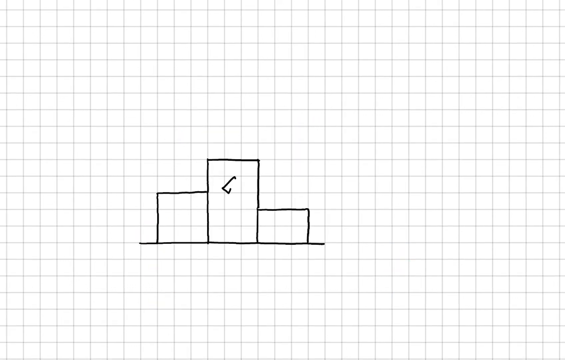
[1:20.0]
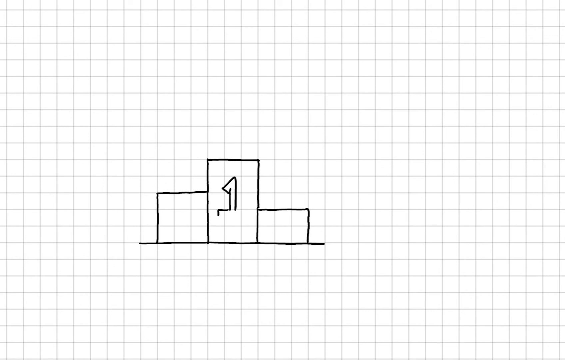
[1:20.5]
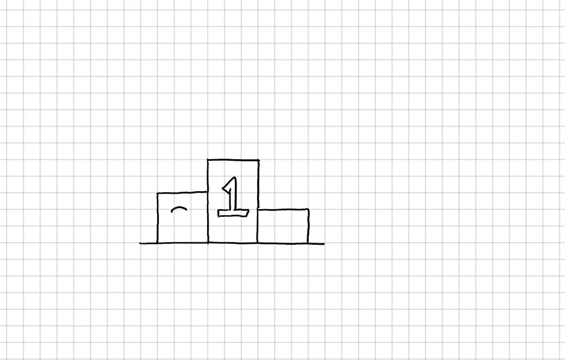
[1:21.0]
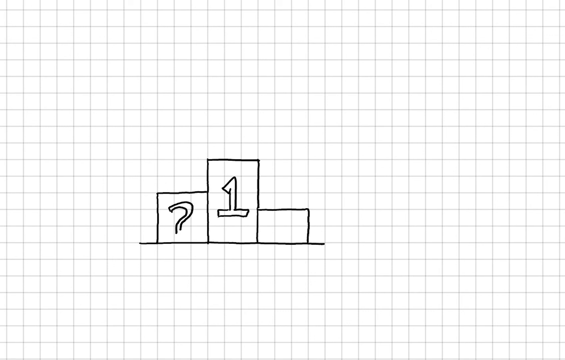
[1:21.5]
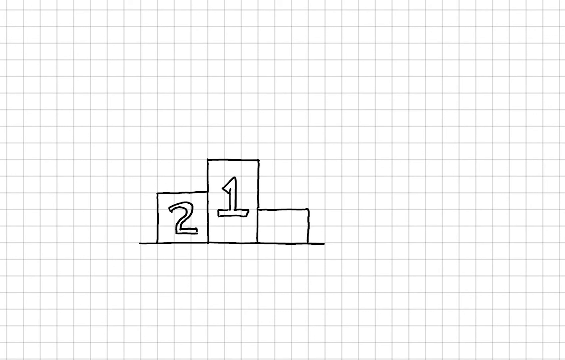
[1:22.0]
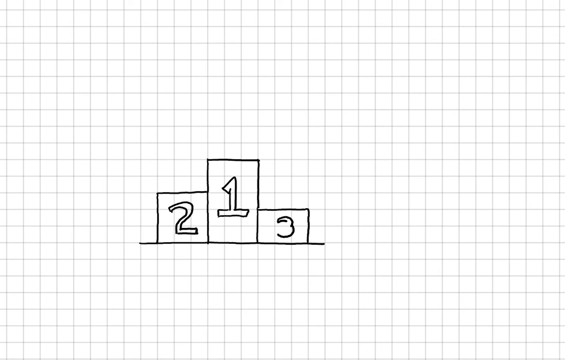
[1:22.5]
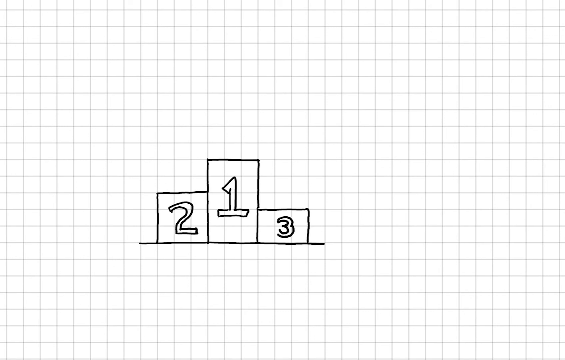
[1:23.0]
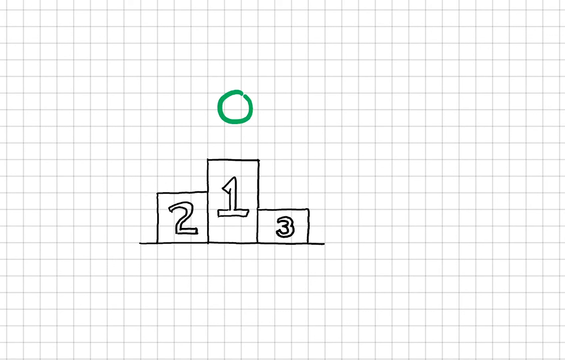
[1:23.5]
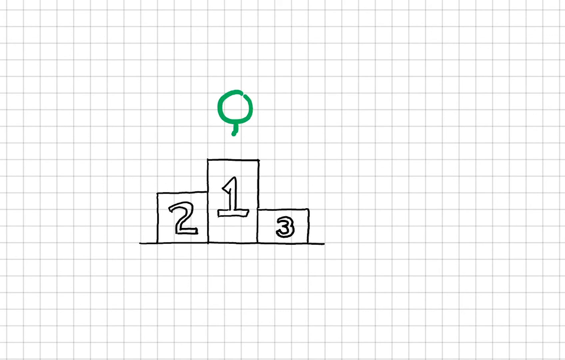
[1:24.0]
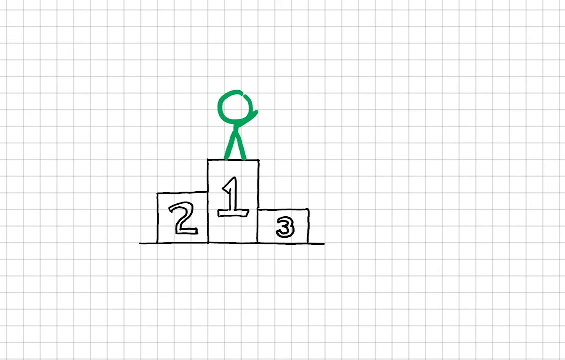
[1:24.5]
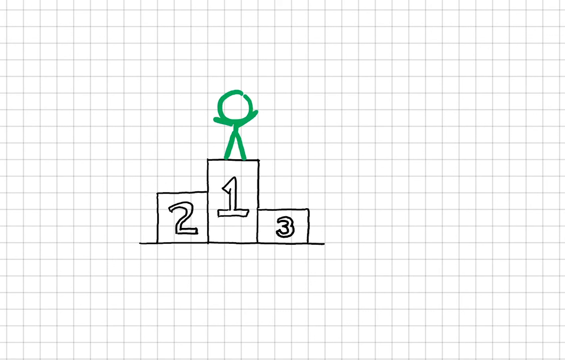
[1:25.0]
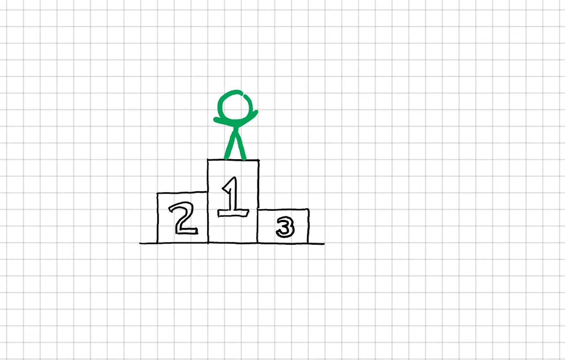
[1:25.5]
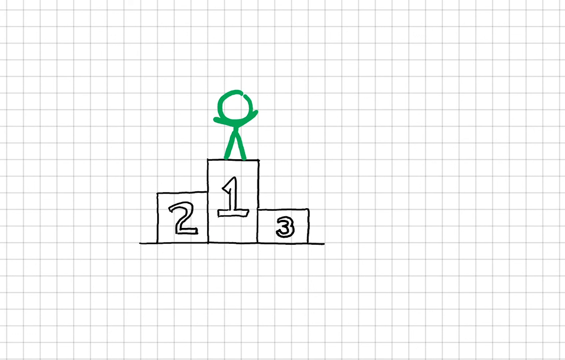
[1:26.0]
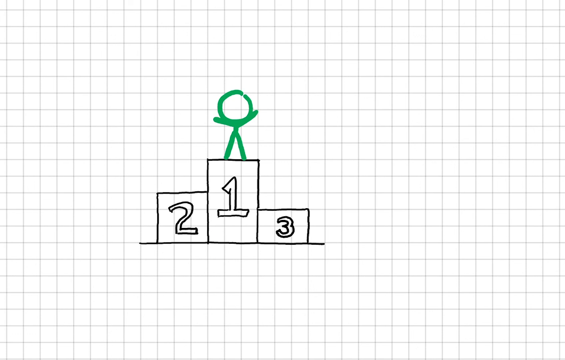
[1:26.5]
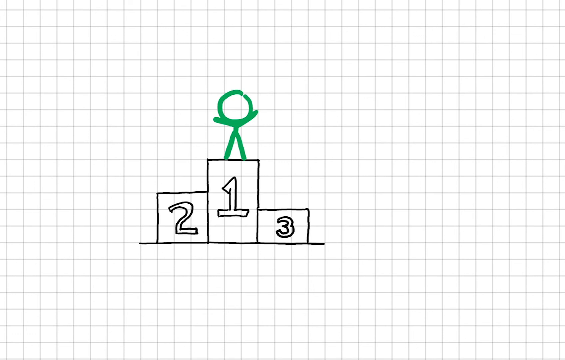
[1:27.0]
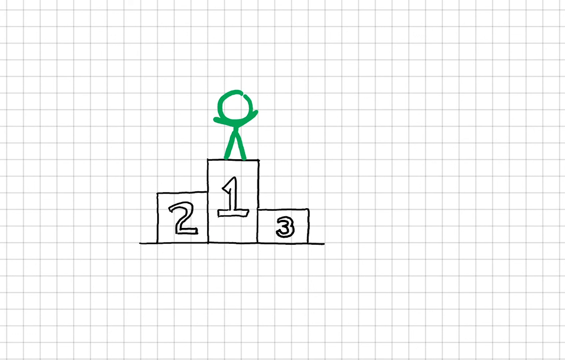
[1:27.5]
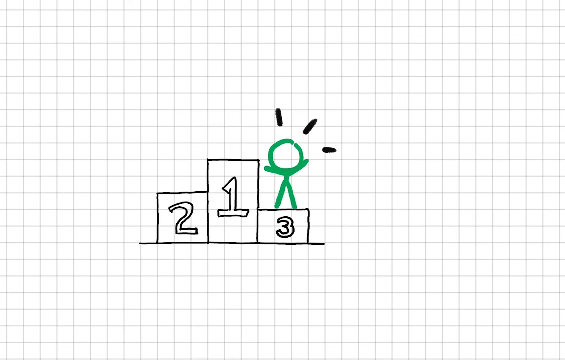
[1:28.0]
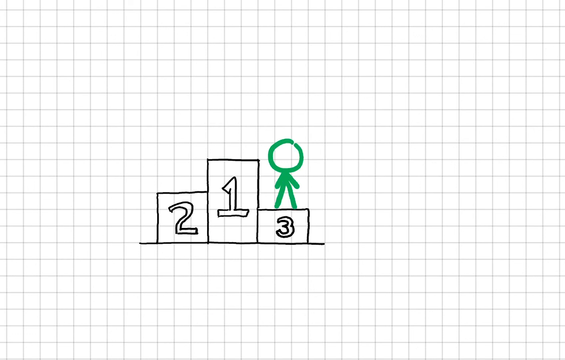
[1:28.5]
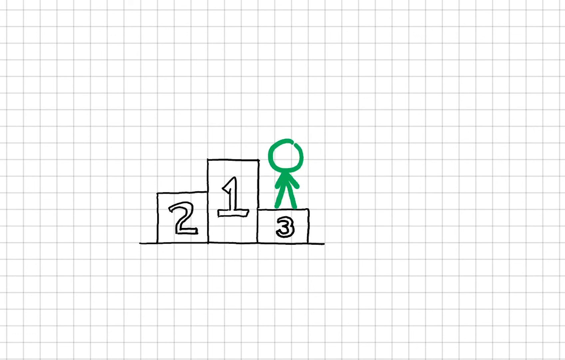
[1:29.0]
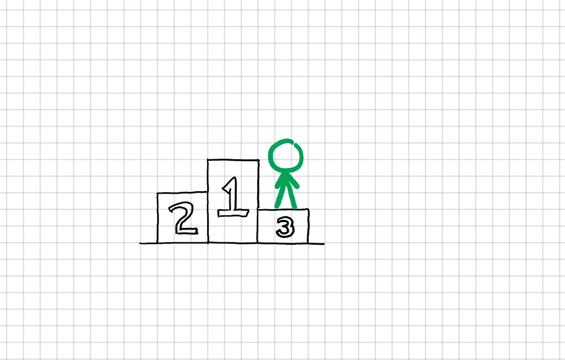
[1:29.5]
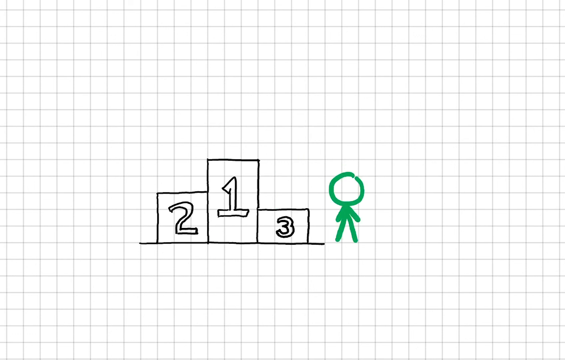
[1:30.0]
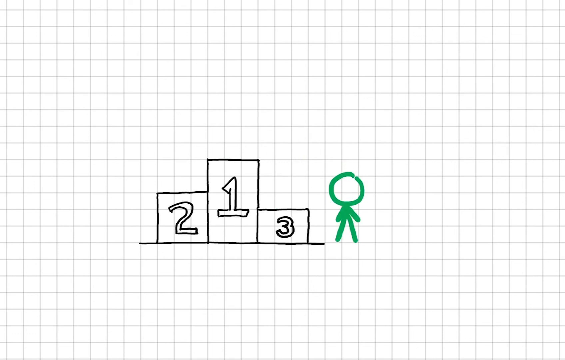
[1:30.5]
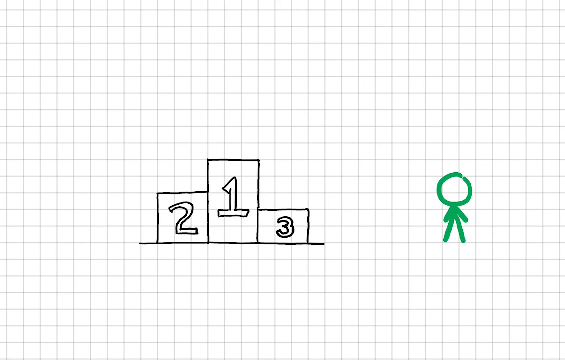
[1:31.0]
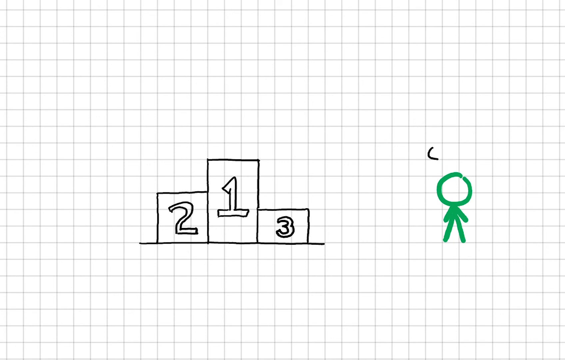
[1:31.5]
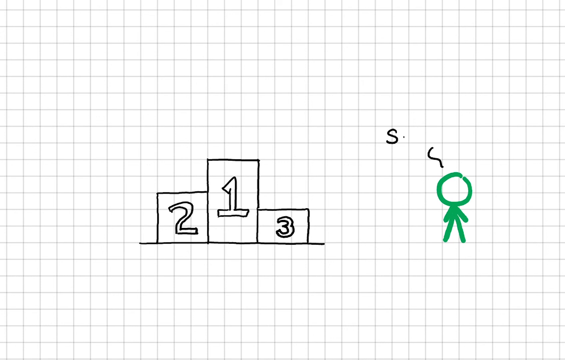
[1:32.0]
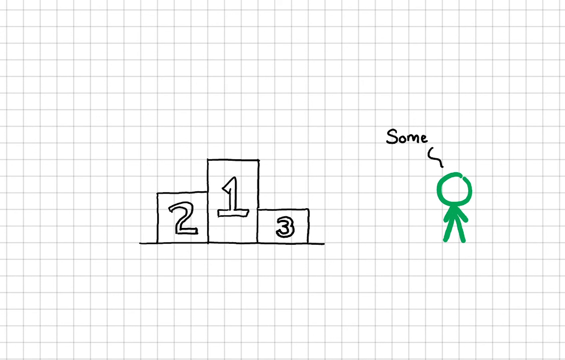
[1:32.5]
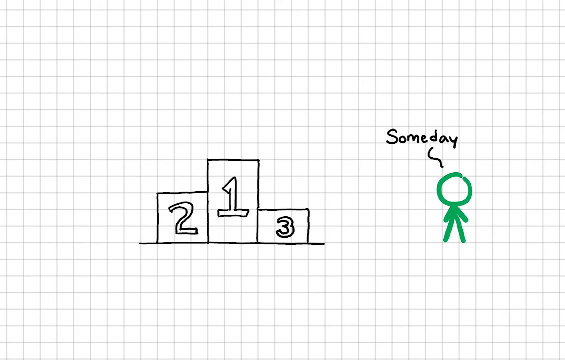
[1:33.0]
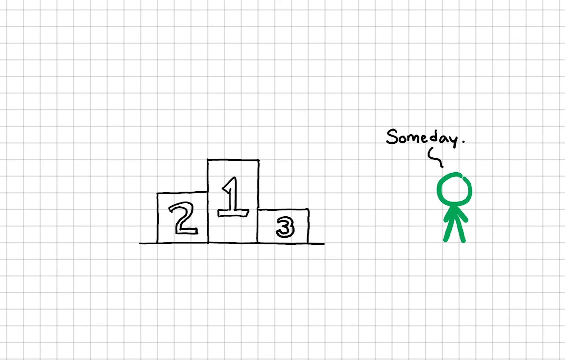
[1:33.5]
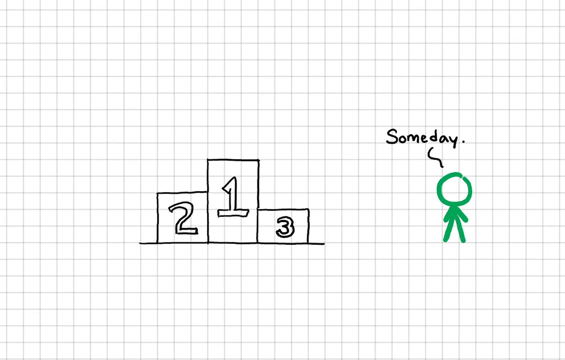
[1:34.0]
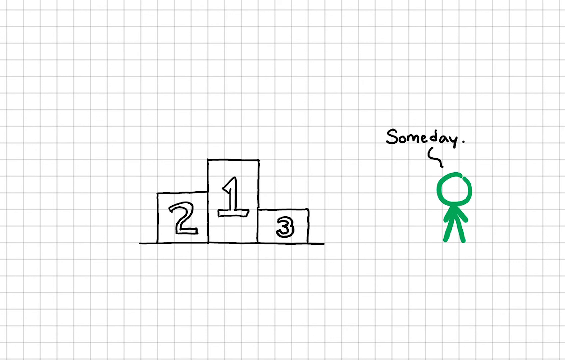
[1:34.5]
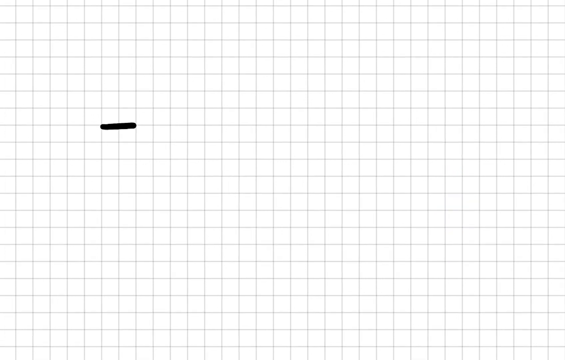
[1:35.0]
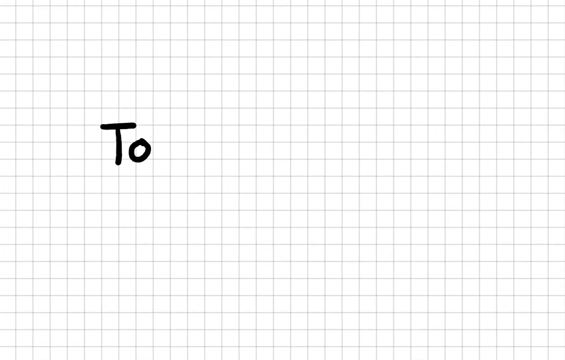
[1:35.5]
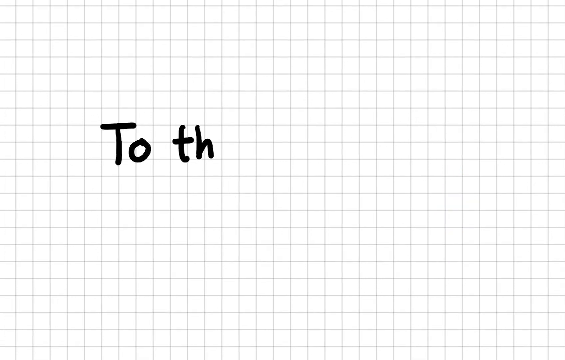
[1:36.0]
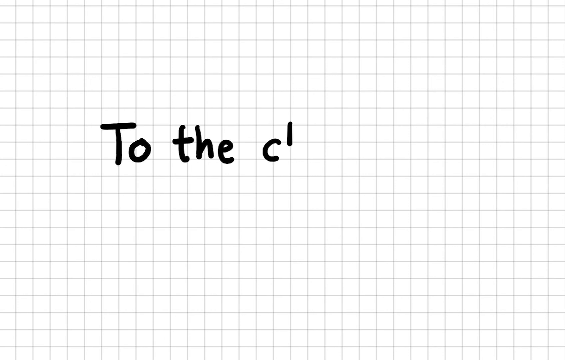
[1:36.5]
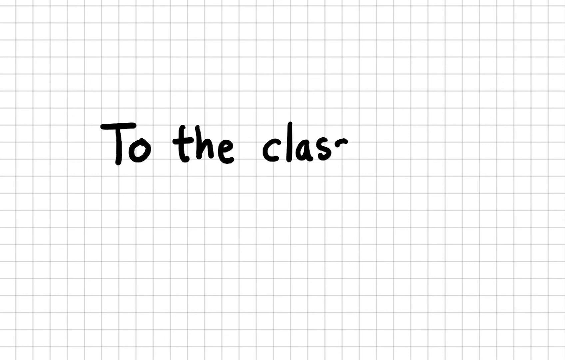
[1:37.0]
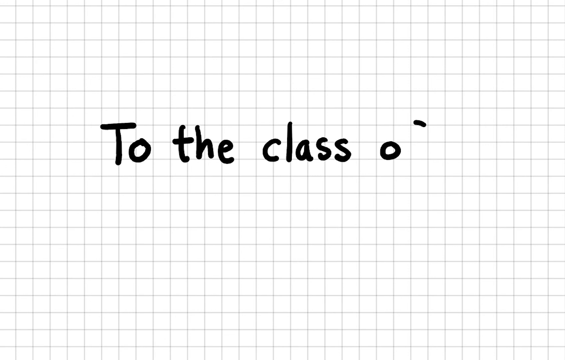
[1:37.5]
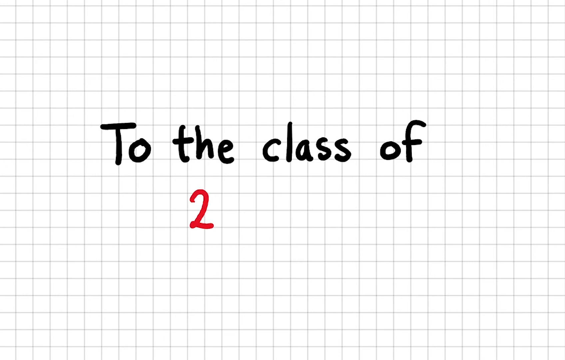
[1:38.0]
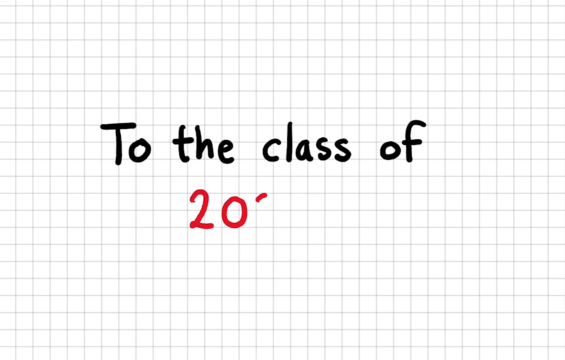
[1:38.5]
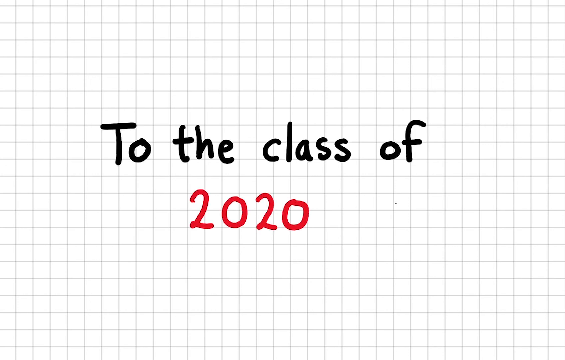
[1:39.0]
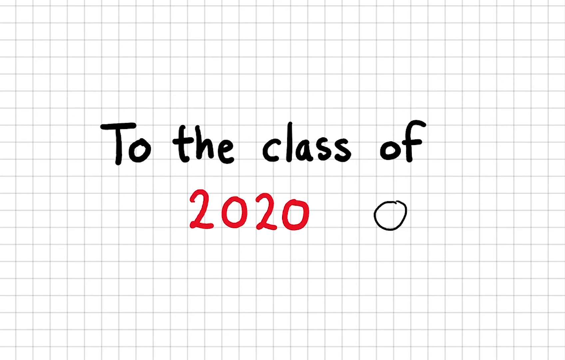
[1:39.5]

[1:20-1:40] A blank screen with a gridded background shows three blocks being illustrated. They are labeled first place, second place and third place. The figure at number one, happy and jumpy, jumps out of the three blocks and moves away, and "some day" appears, as if he seems to be dreaming of being there one day. Then "to the class of 2020" appears, which looks like a message for a group of seniors.